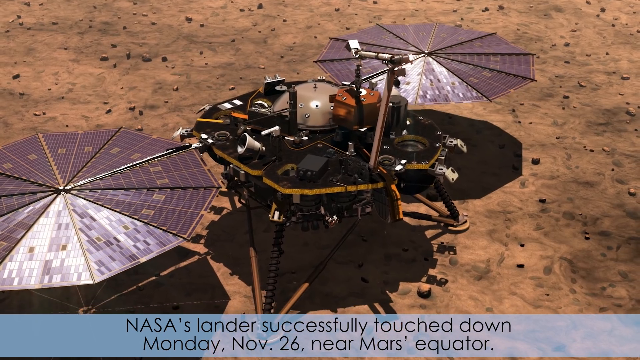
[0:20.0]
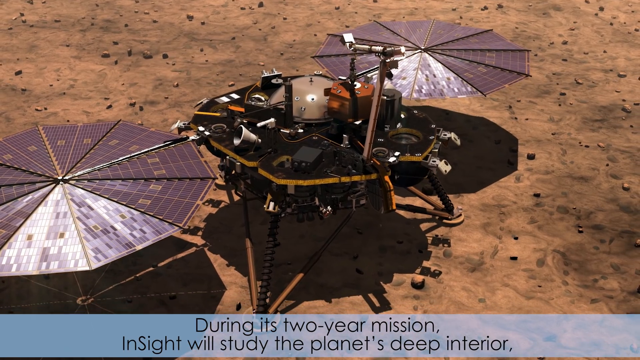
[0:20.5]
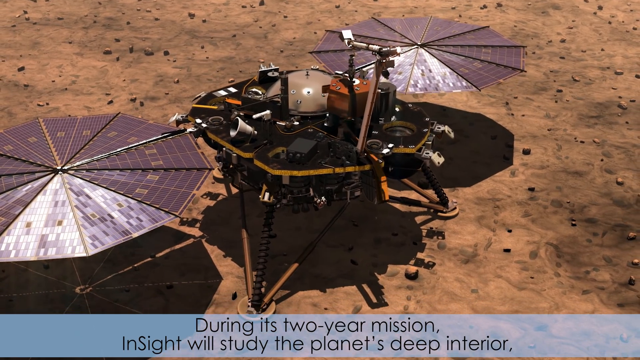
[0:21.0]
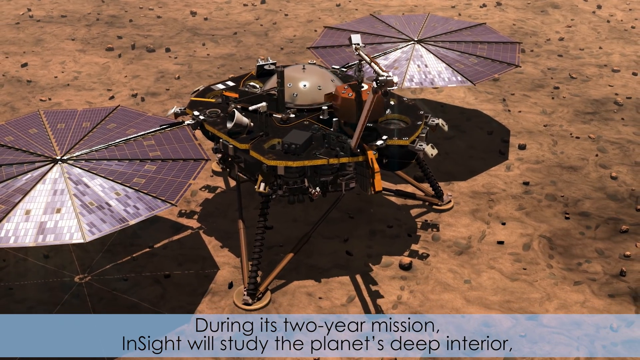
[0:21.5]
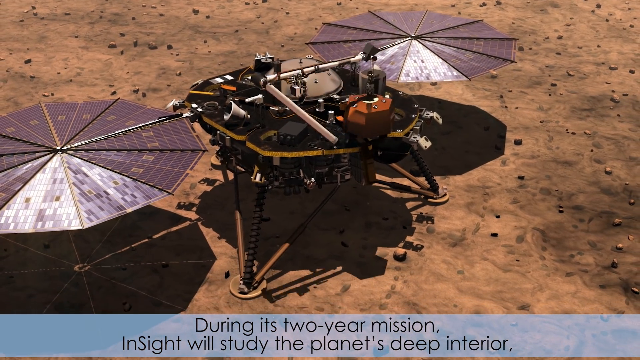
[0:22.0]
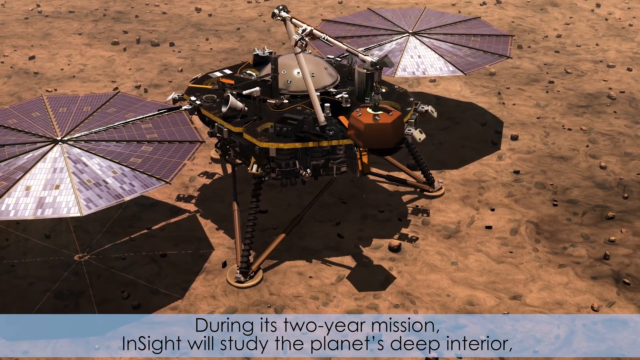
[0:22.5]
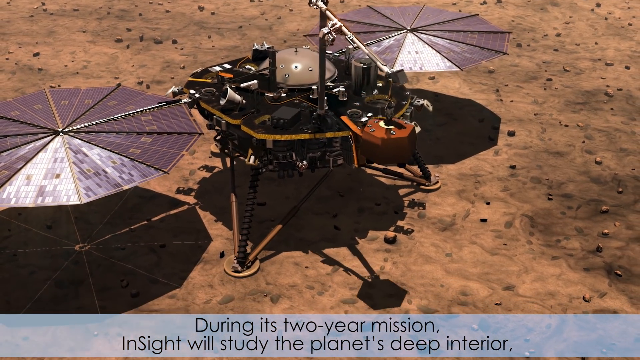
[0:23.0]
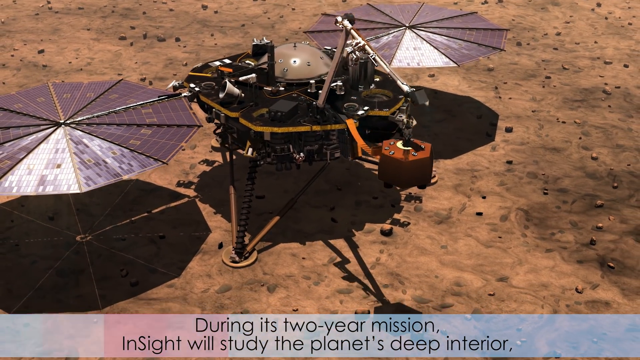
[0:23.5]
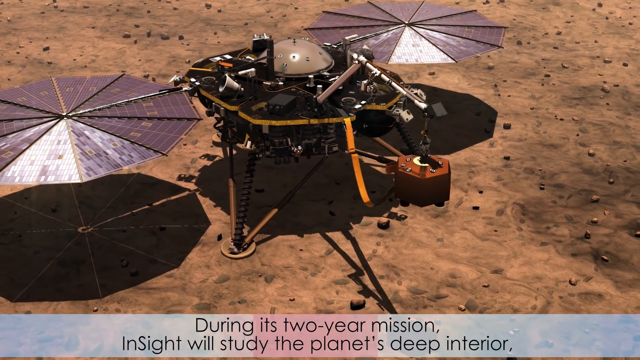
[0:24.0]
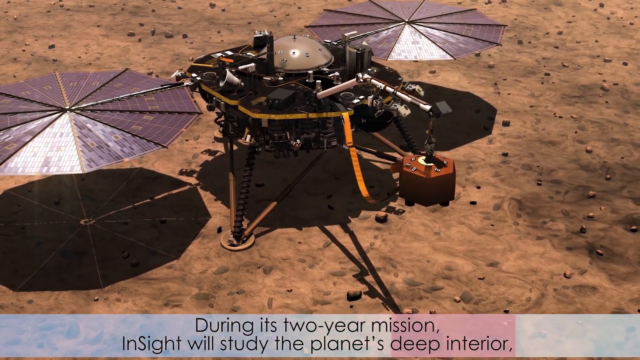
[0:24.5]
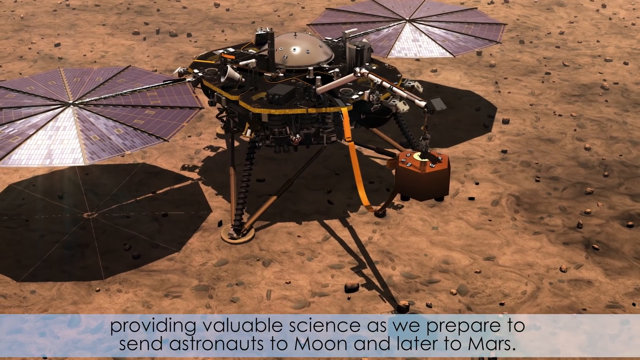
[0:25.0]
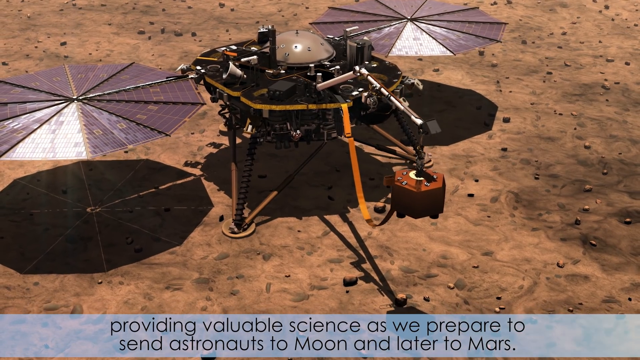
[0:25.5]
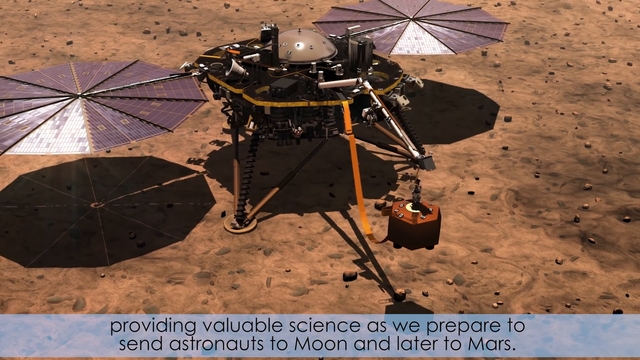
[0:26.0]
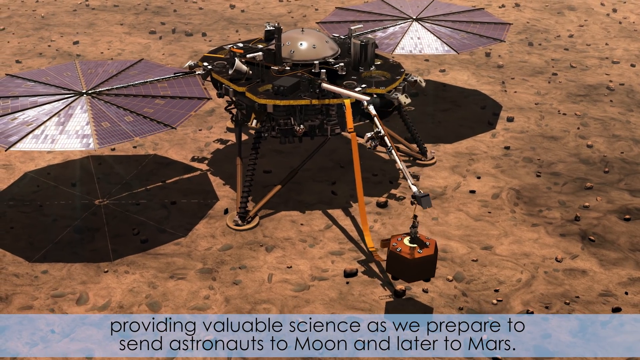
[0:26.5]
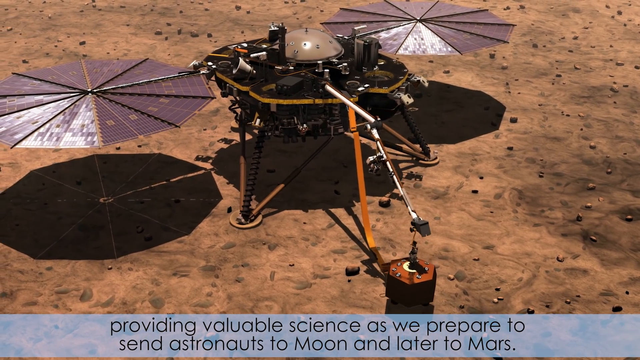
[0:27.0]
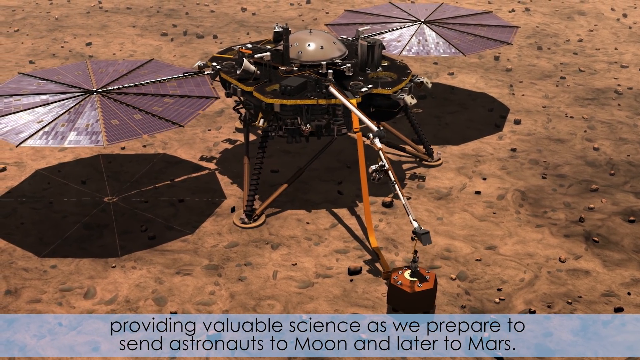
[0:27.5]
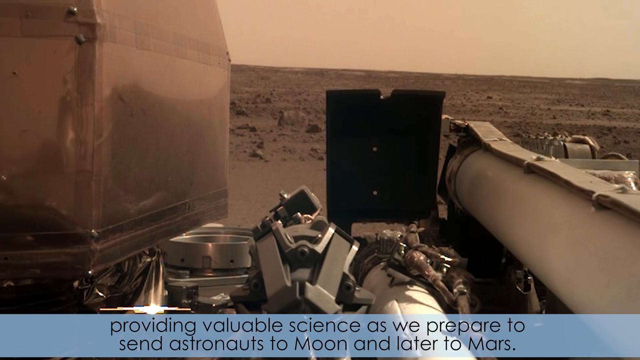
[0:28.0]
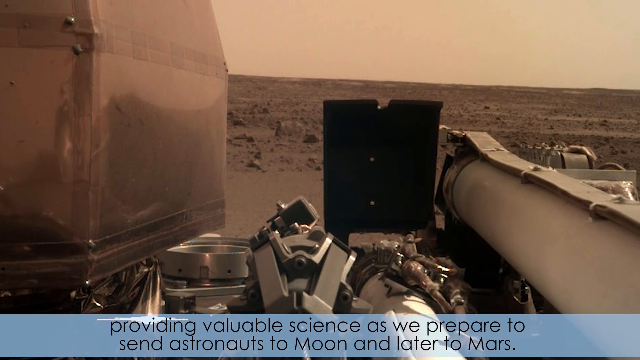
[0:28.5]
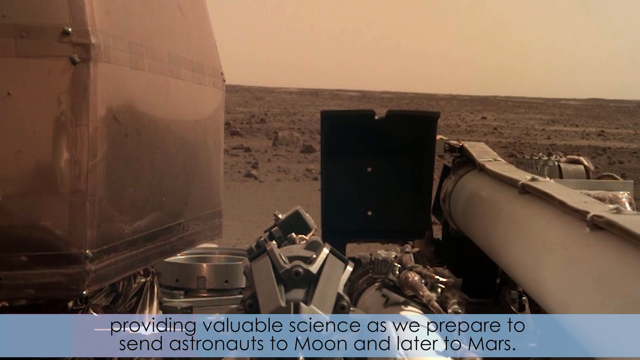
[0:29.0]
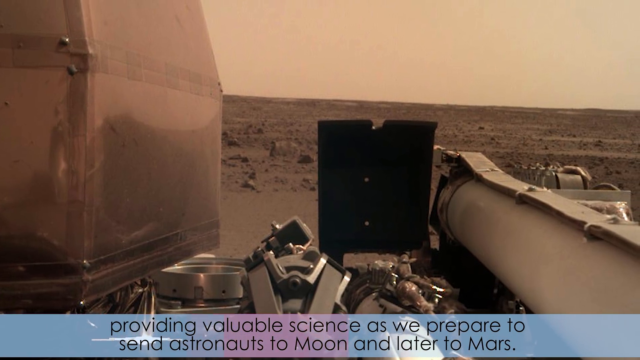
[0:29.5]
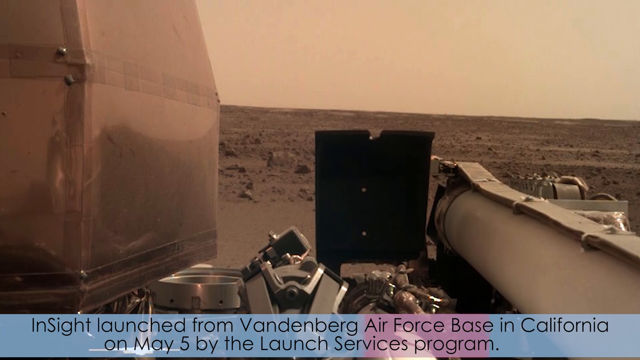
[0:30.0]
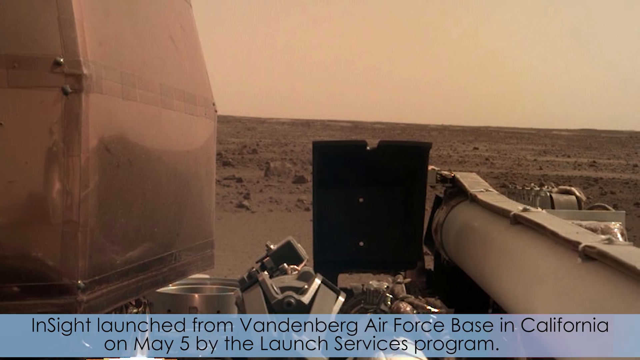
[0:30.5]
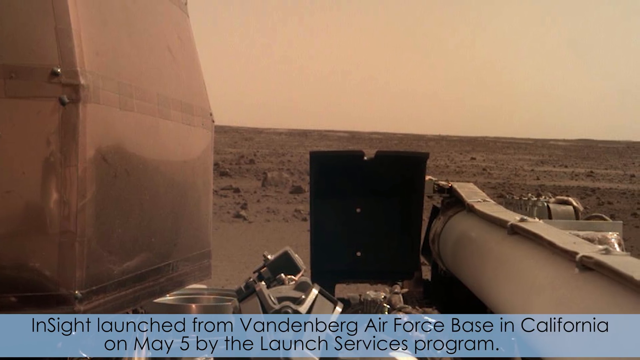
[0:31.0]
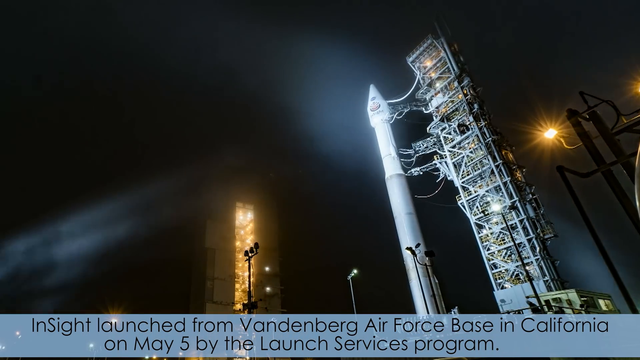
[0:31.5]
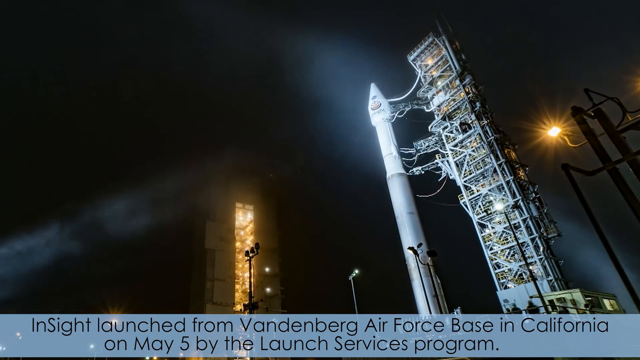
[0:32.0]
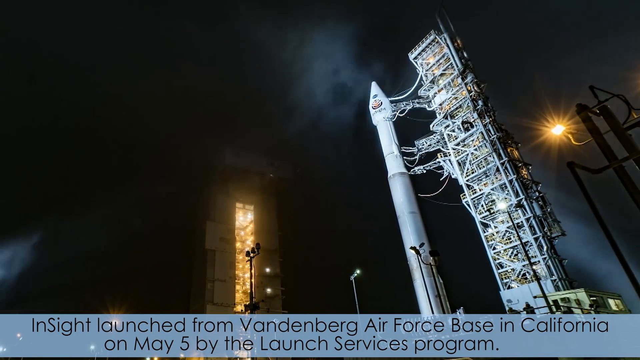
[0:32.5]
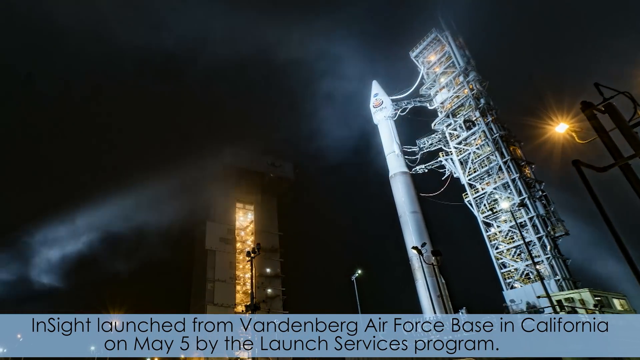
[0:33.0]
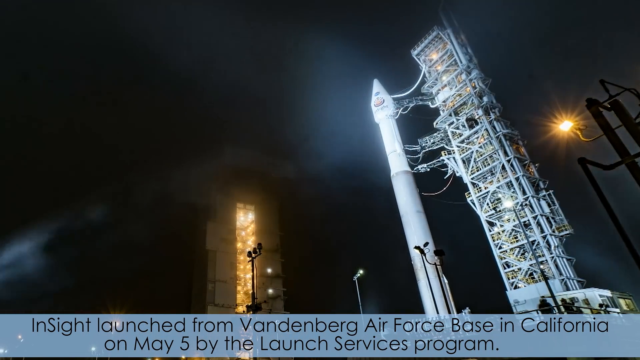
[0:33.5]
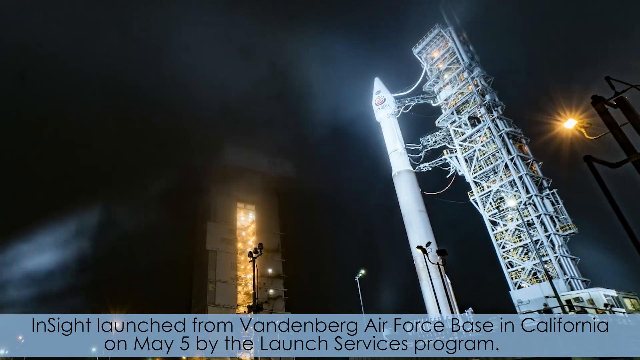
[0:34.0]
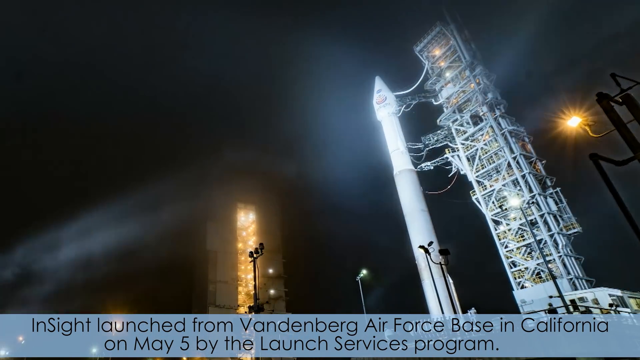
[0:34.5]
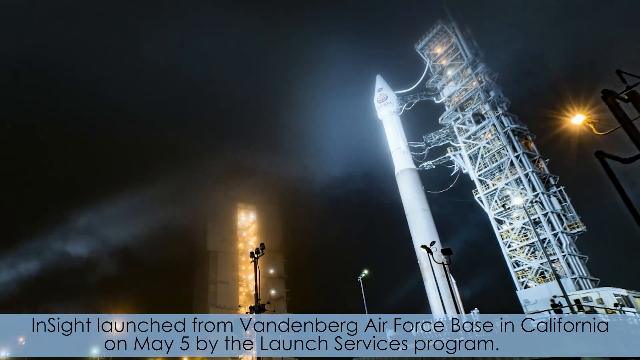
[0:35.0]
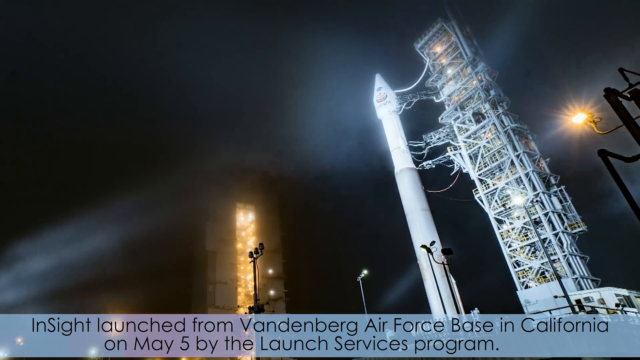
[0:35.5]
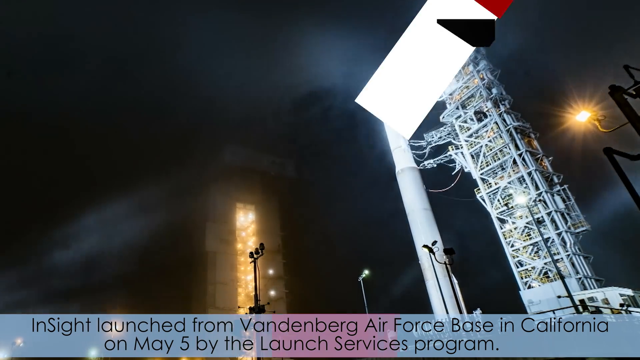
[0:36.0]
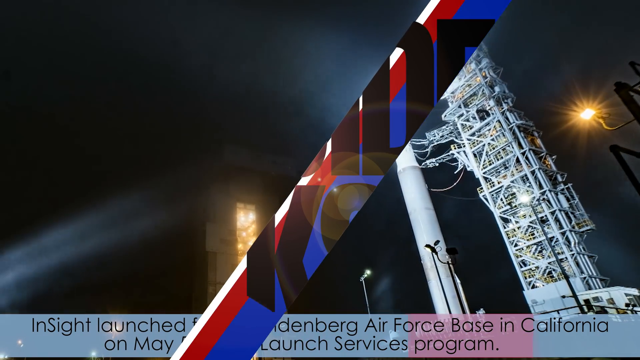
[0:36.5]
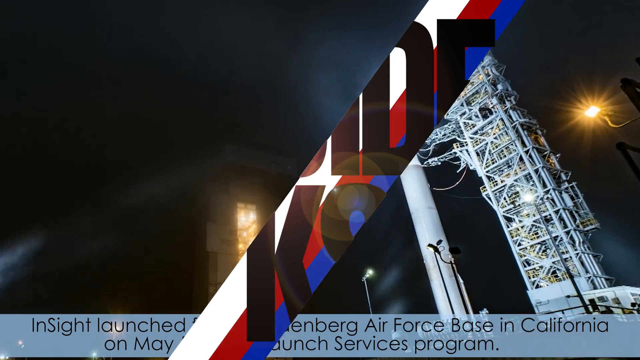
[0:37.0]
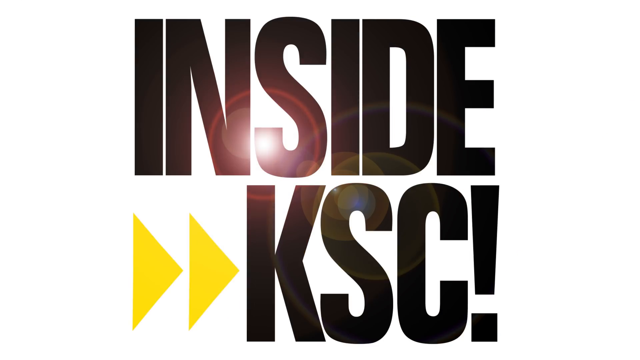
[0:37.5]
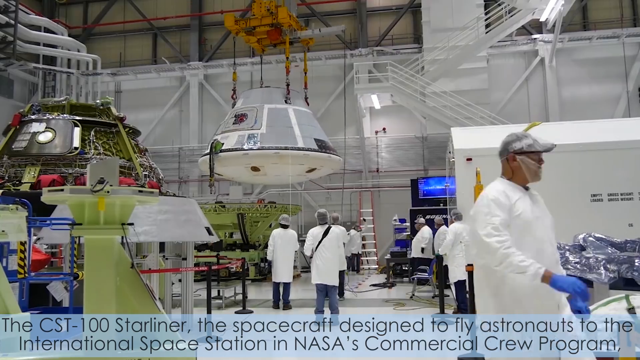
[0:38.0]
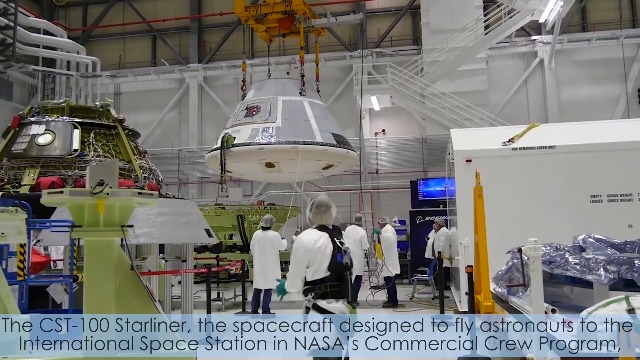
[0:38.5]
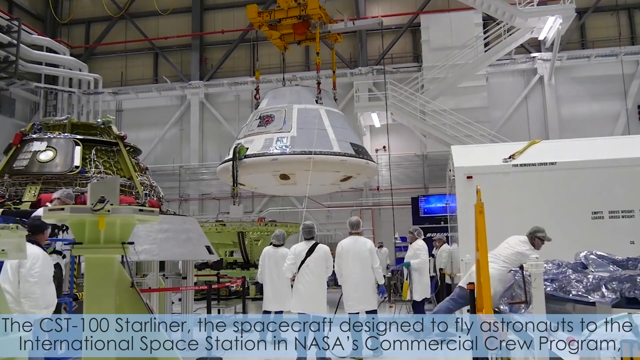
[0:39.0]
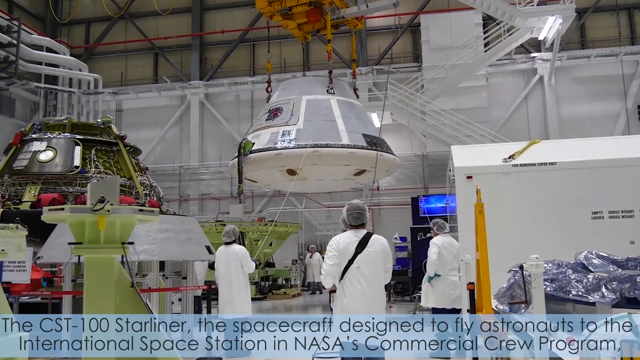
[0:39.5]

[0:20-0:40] On brownish soil is a dark lander module with two purple jagged circles on either side, apparently to capture light from the sun. A gray box underneath reads in black font "during its two-year mission, InSight will study the planet's deep interior." A white arm brings a reddish object with a yellow strap attached and lands it on the soil. The lettering below changes to "providing valuable science as we prepare to send astronauts to the moon and later to Mars." A shot from inside the lander shows the gray terrain and gray sky. Next, a white rocket is attached to a white squared apparatus, with white smoke over the top and yellow lighting on the right and left sides. A grayish box below reads in black font "InSight launched from Vandenberg Air Force Base in California on May 5th by the Launch Services Program." The footage is sped up. A white background with black lettering in the center reads "Inside KSC", with two yellow arrows pointing at the K. A gray section at the bottom reads in black font "the CST-100 Starliner, the spacecraft designed to fly astronauts to International Space Station and NASA's Commercial Crew Program." A number of men in white lab coats guide a gray rounded capsule.